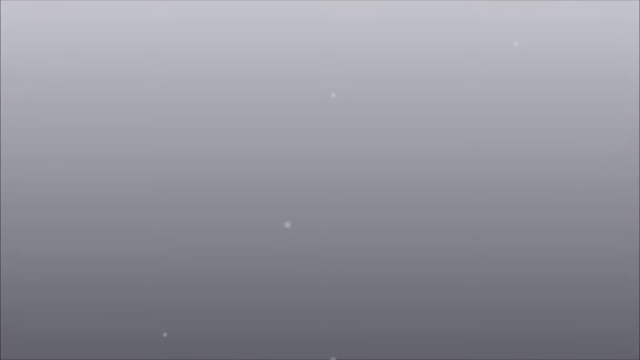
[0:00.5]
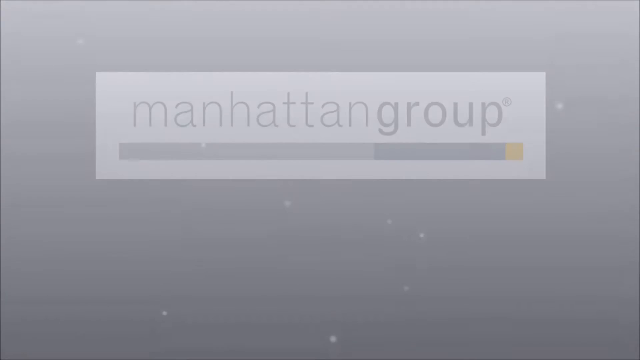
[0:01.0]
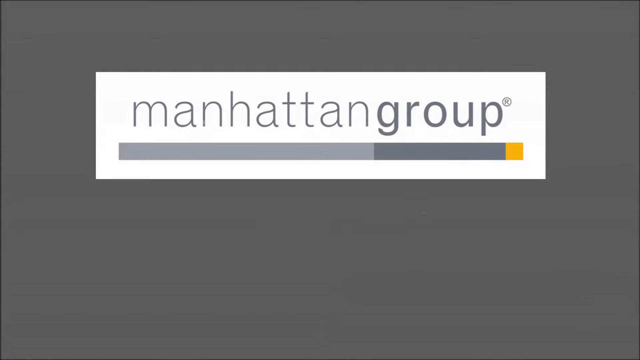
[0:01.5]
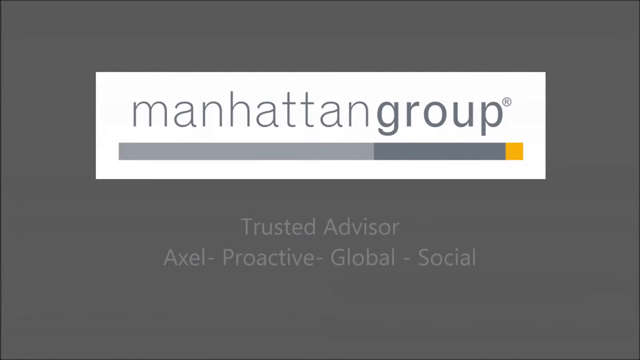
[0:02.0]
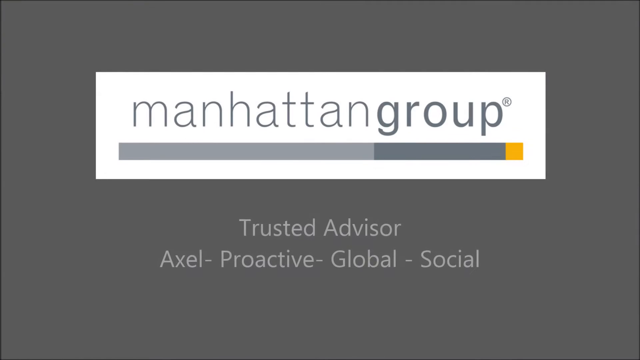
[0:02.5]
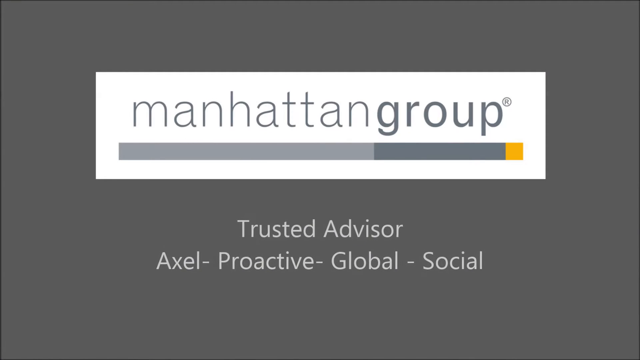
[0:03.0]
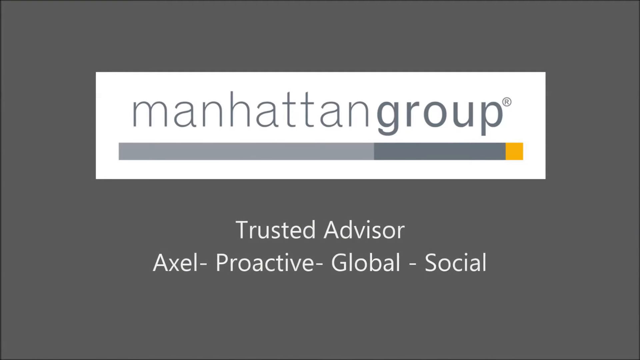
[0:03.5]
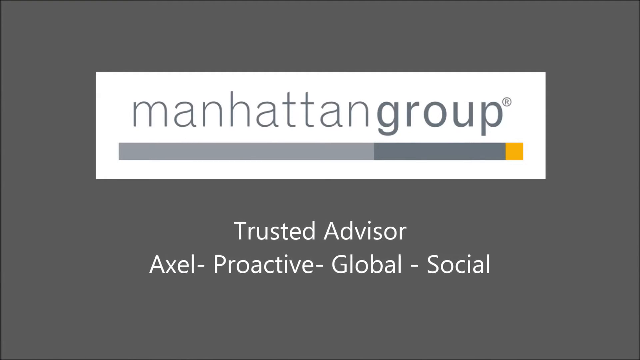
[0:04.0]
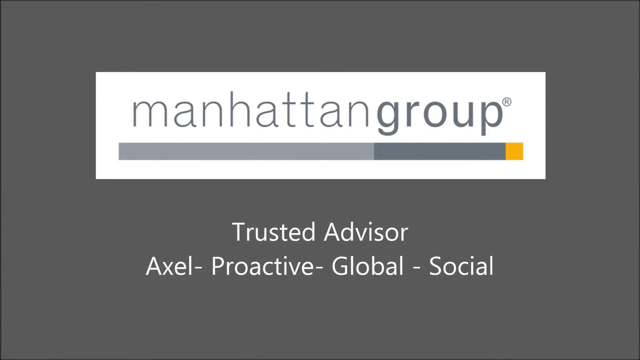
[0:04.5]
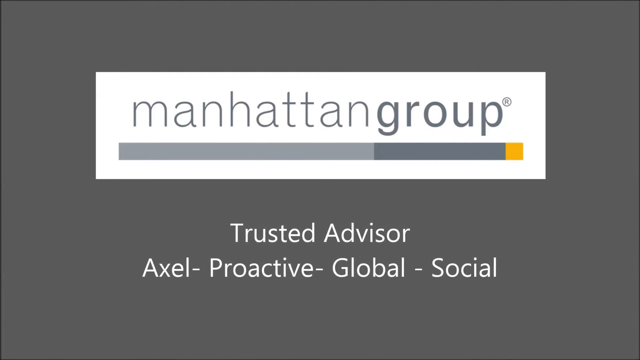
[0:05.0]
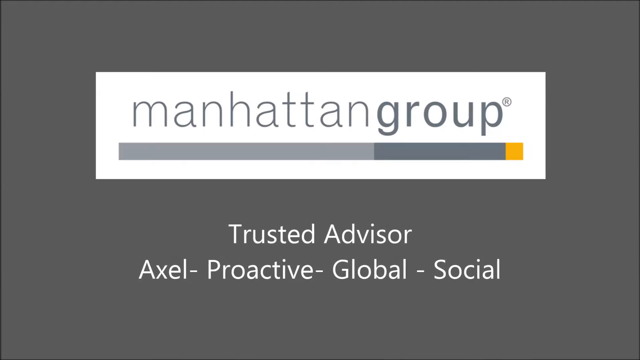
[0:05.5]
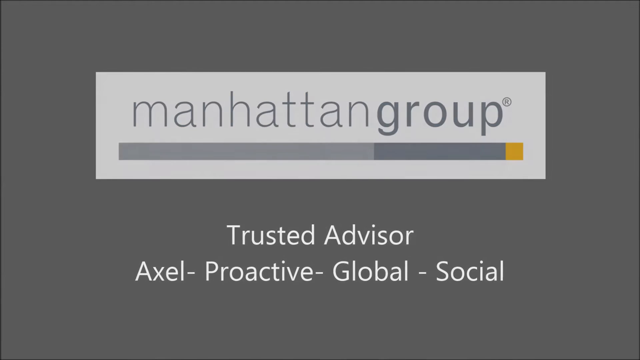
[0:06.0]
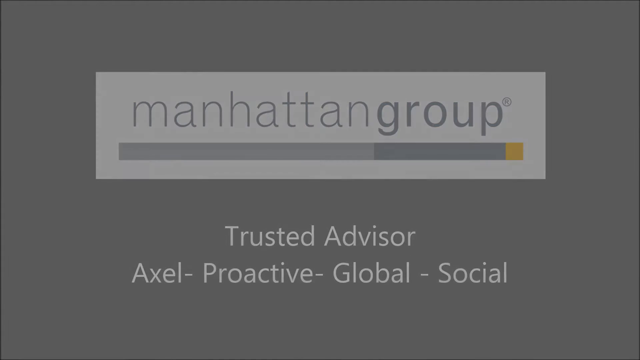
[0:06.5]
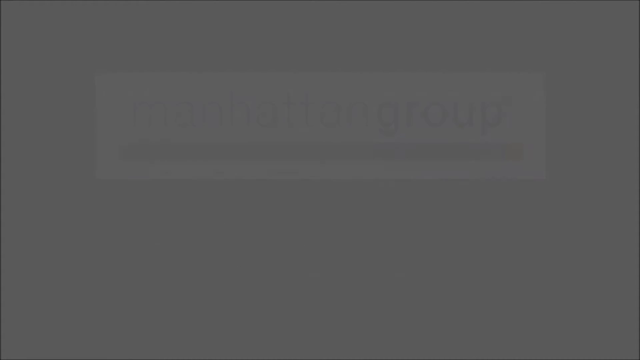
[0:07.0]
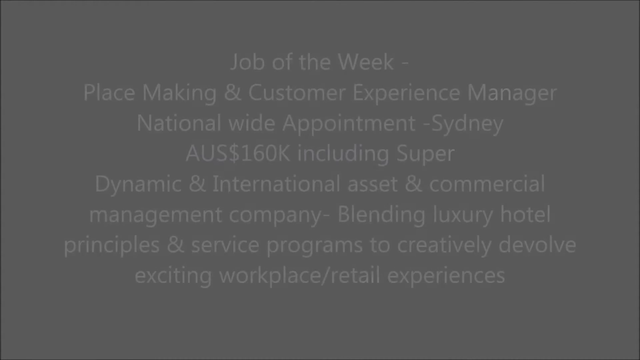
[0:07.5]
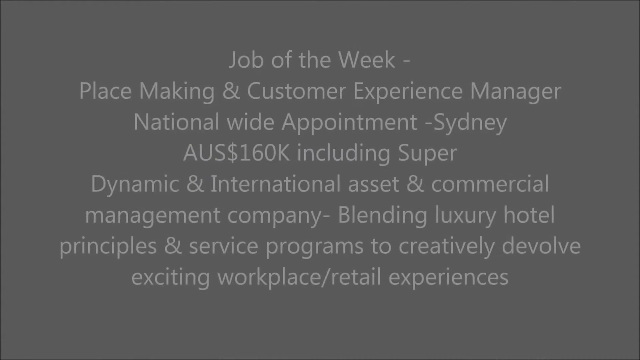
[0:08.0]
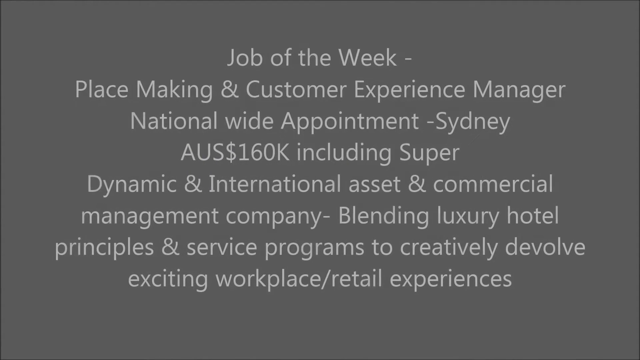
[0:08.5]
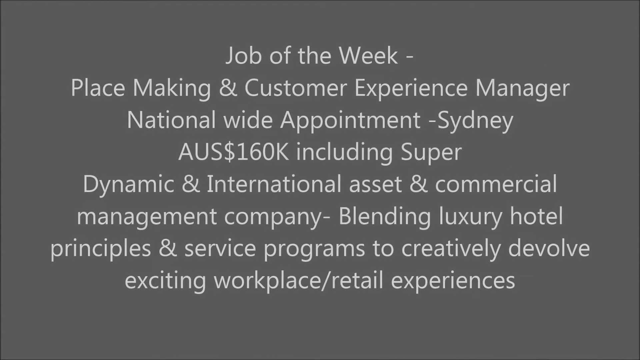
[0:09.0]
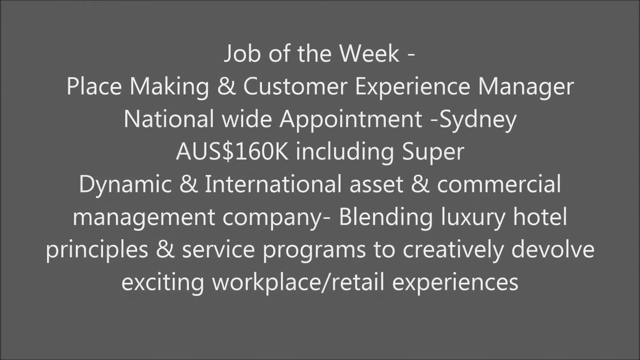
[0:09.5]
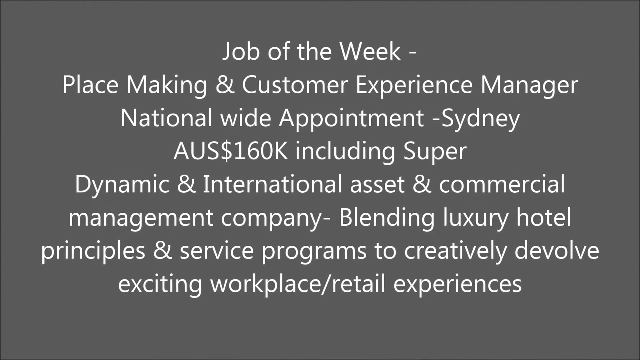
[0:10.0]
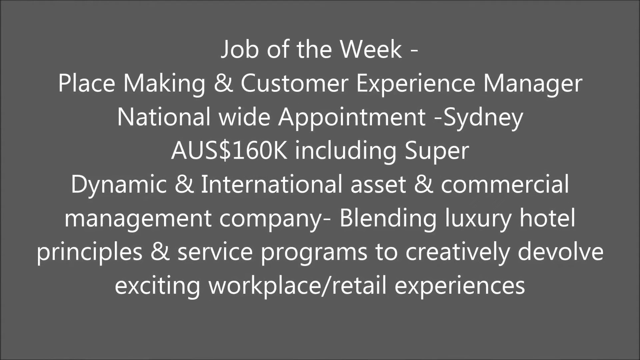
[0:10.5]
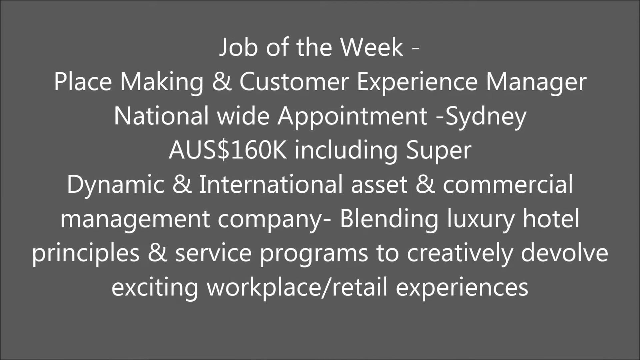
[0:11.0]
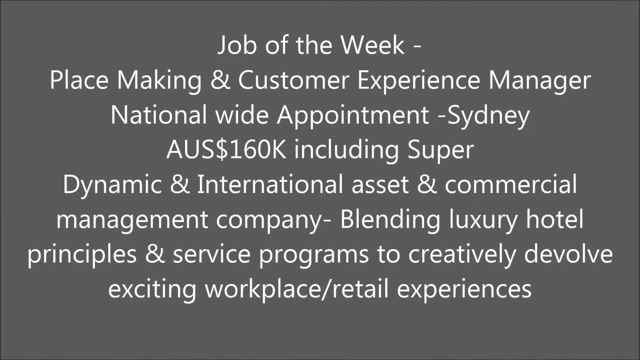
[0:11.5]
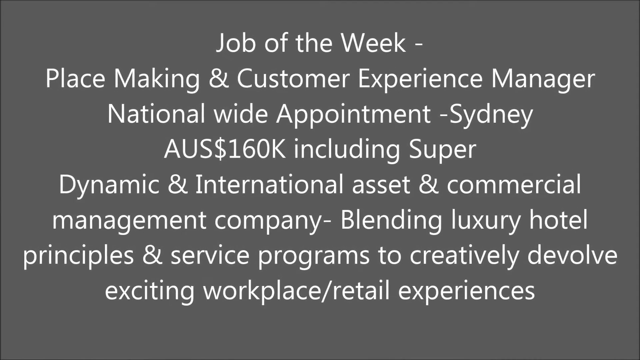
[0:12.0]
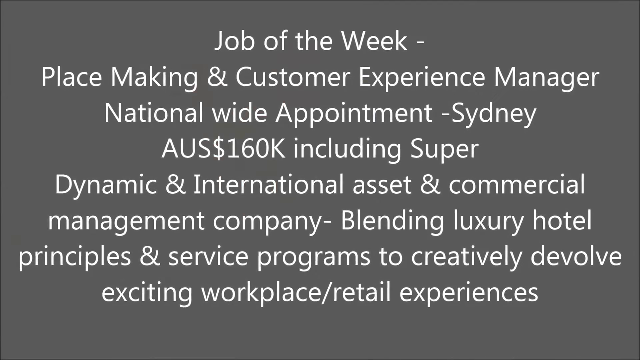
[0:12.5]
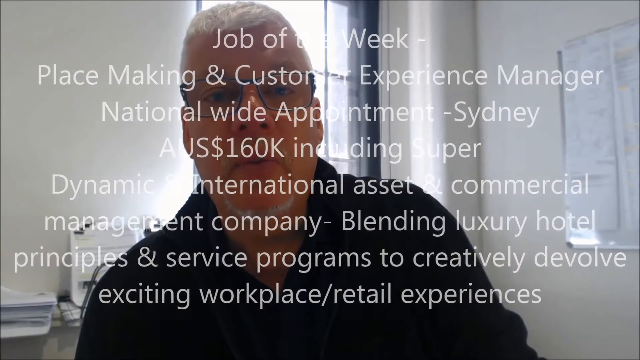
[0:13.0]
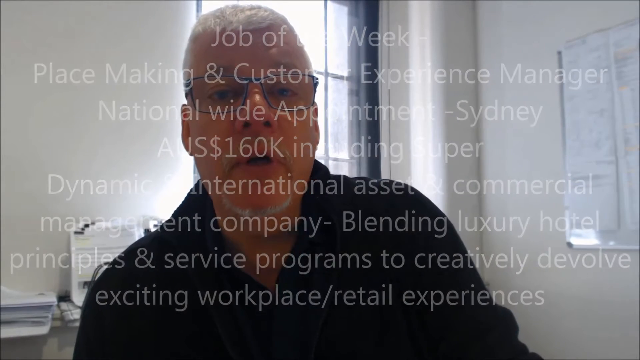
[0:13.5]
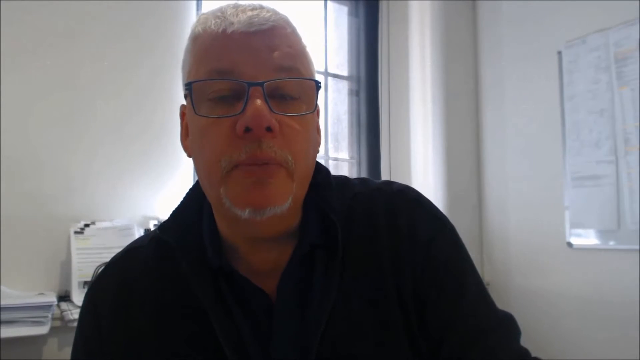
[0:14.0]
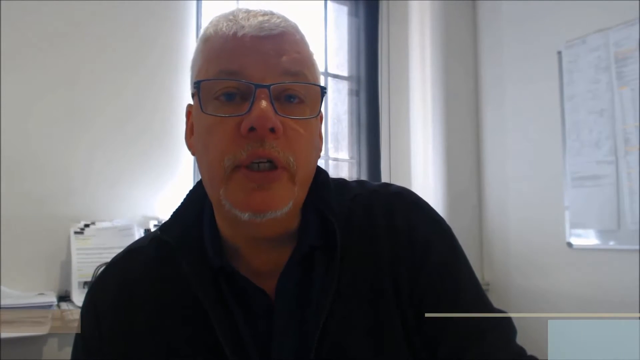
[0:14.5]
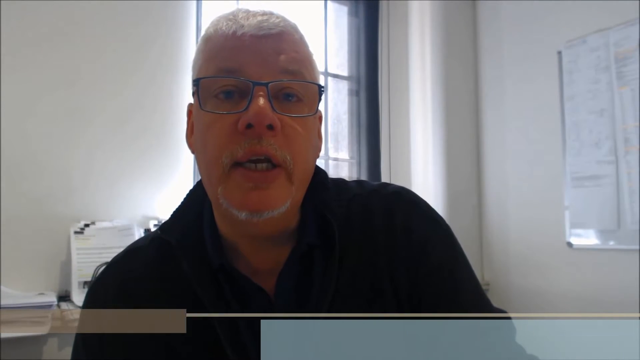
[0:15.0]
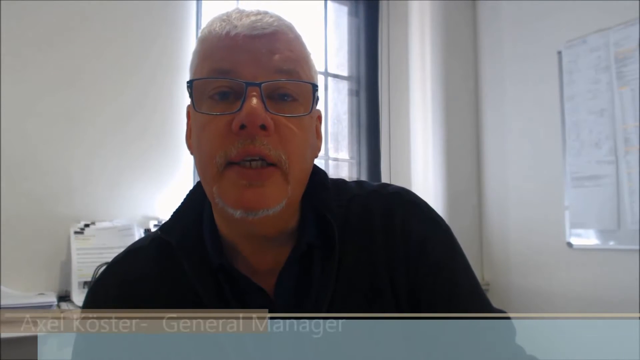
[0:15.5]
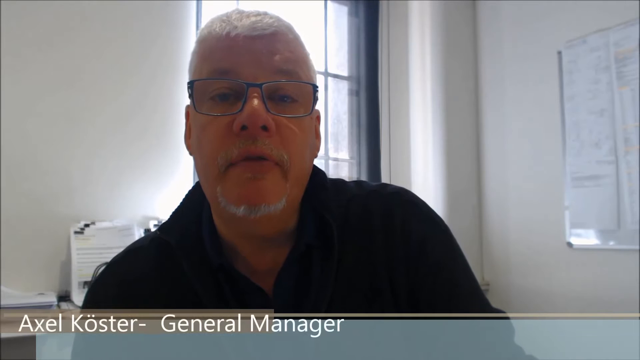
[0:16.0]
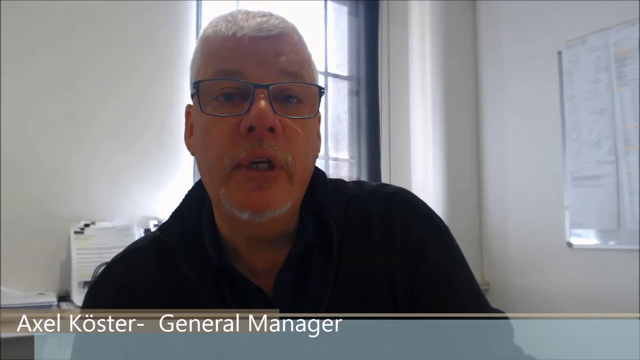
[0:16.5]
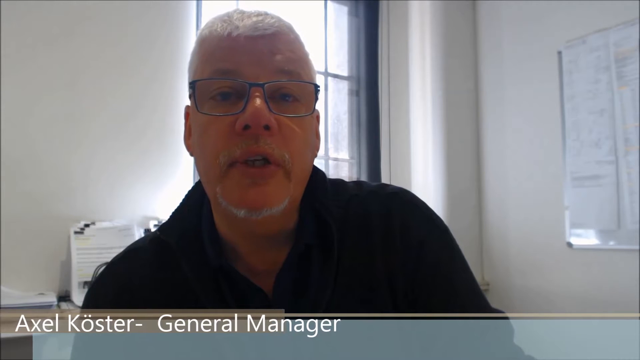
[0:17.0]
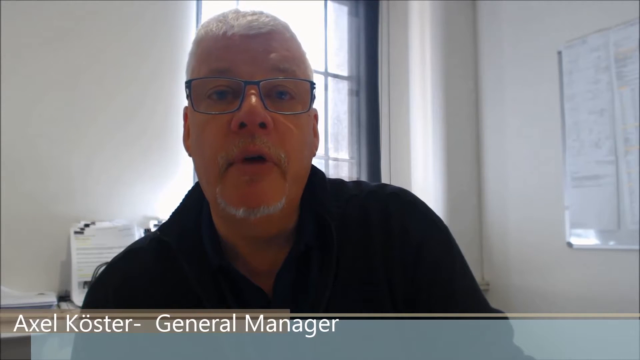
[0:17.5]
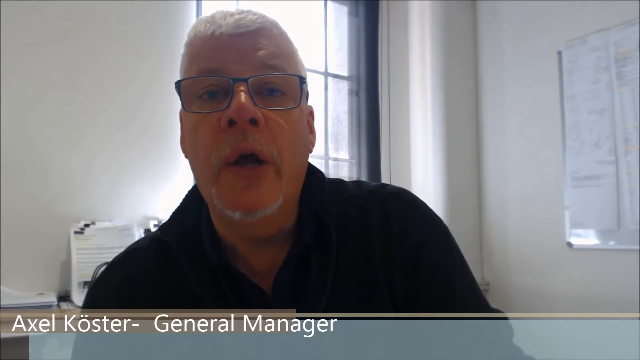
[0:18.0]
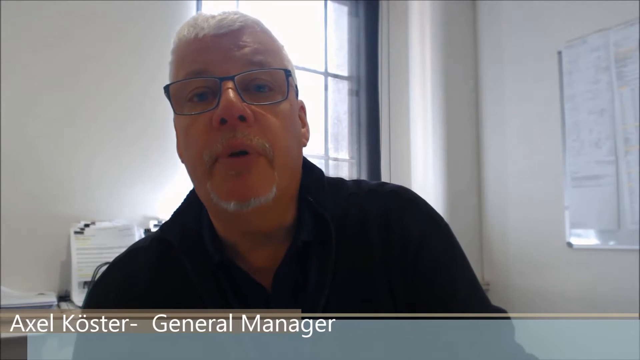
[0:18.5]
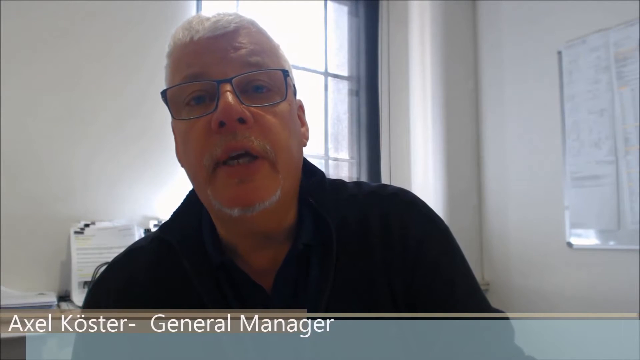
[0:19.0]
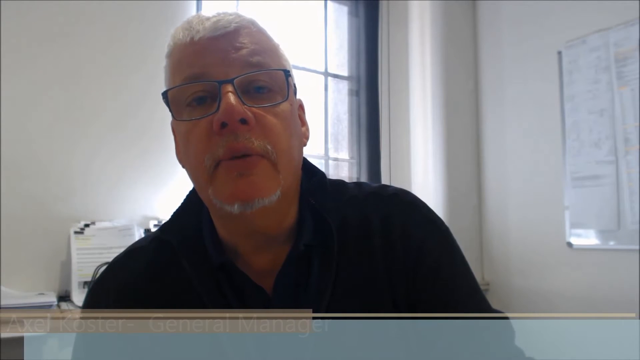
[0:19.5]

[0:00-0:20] The video opens with a screen that reads "Manhattan Group," apparently in blue on a white background. It then switches to a screen that seems to be black with white lettering mentioning something about advising. Next comes footage of a man talking. He is white with gray hair, wears glasses and what appears to be a black shirt. The background looks like an office, possibly with a window behind him and maybe books, and he looks to be sitting at a desk. He is identified as Axel, with a foreign last name.